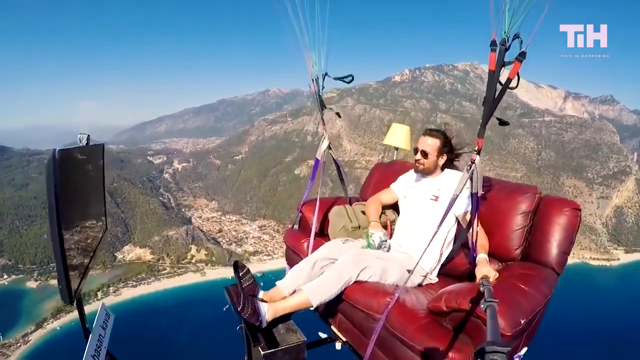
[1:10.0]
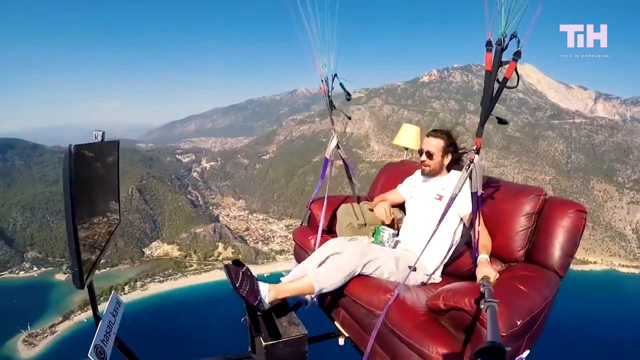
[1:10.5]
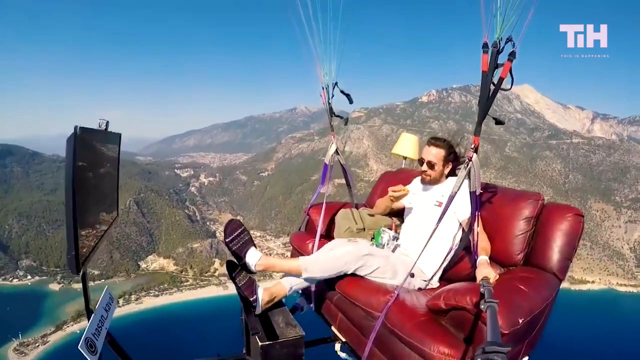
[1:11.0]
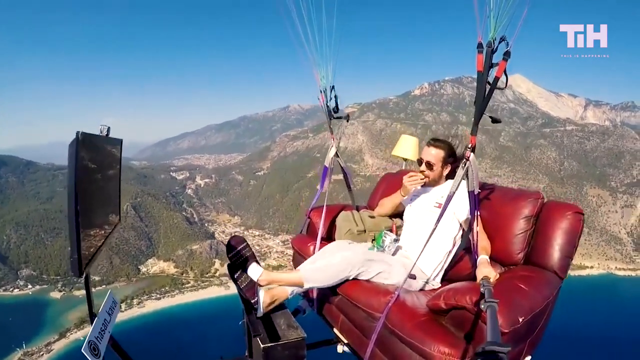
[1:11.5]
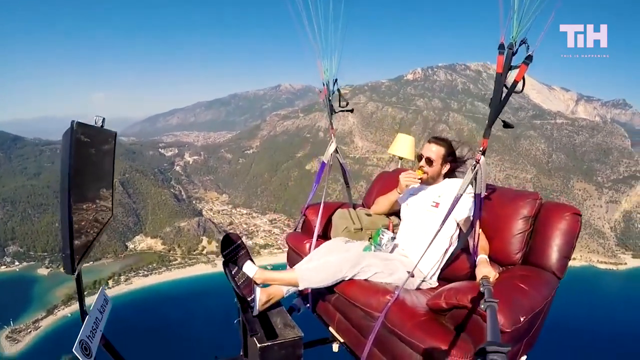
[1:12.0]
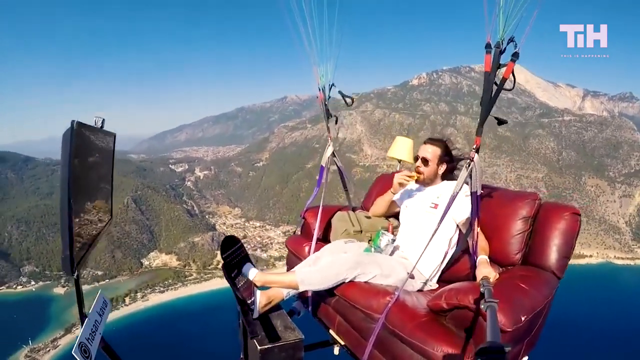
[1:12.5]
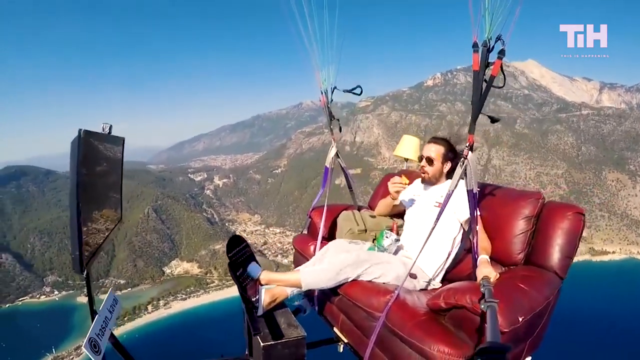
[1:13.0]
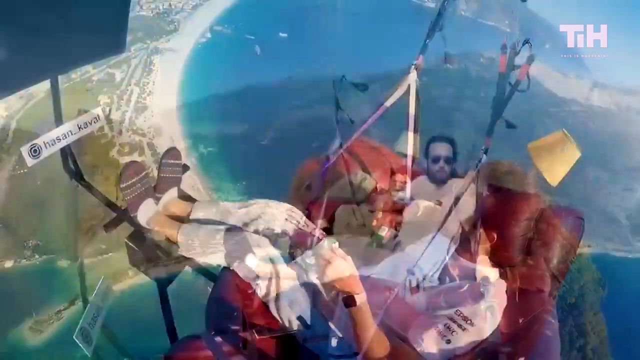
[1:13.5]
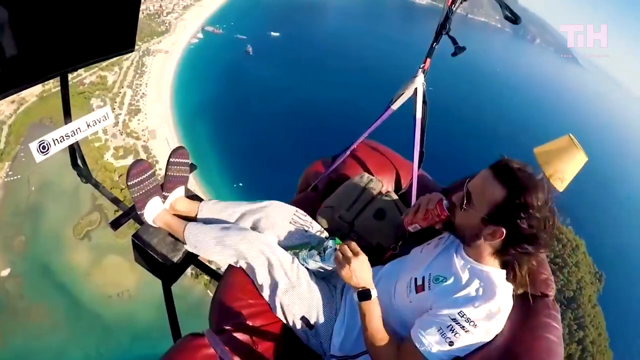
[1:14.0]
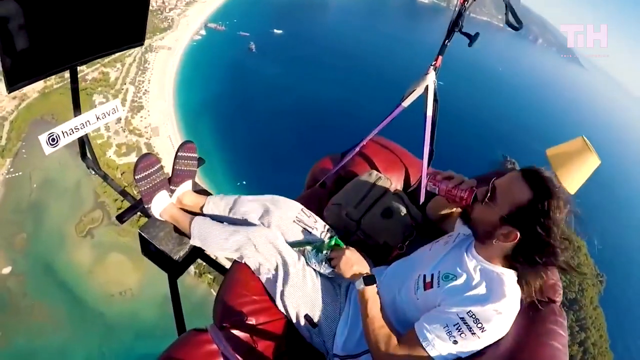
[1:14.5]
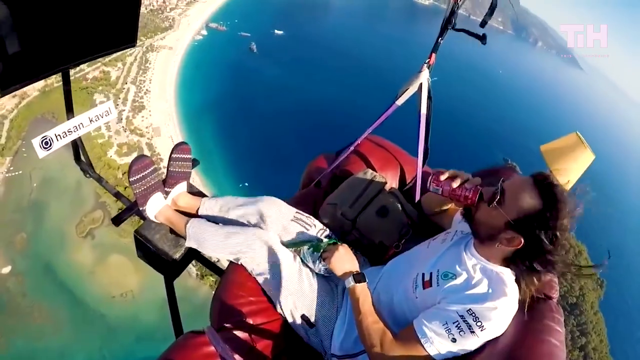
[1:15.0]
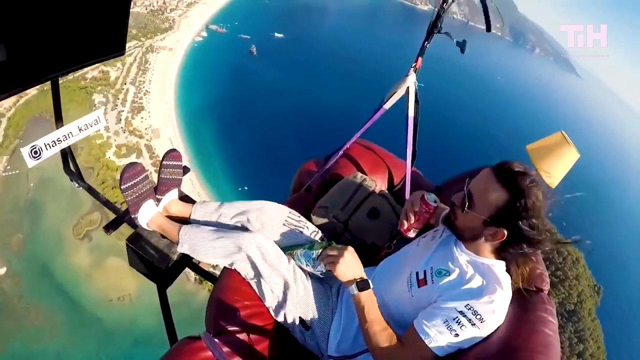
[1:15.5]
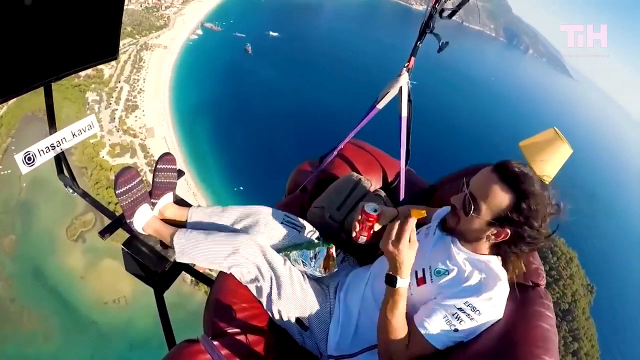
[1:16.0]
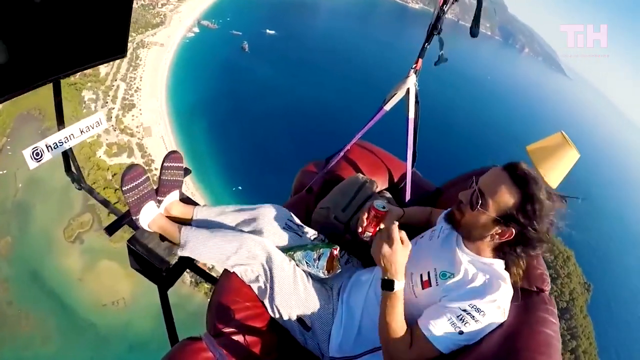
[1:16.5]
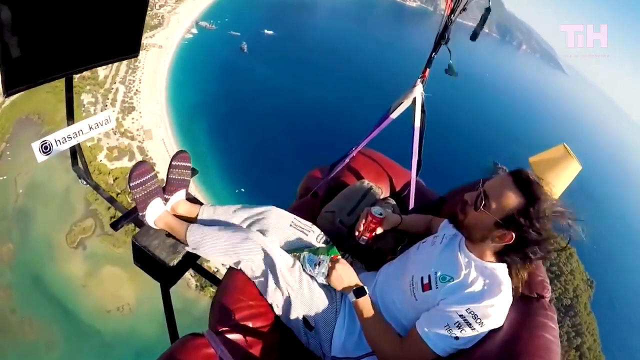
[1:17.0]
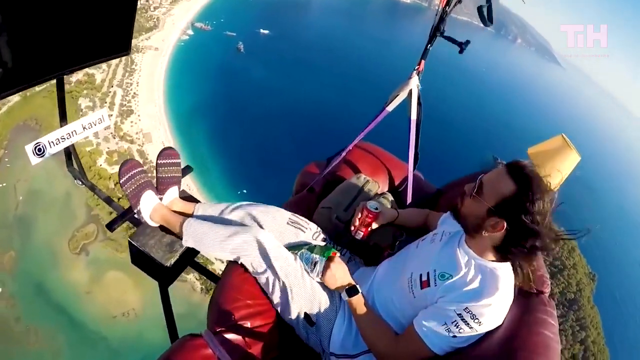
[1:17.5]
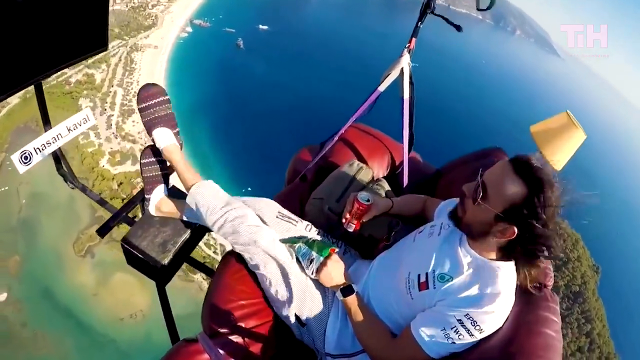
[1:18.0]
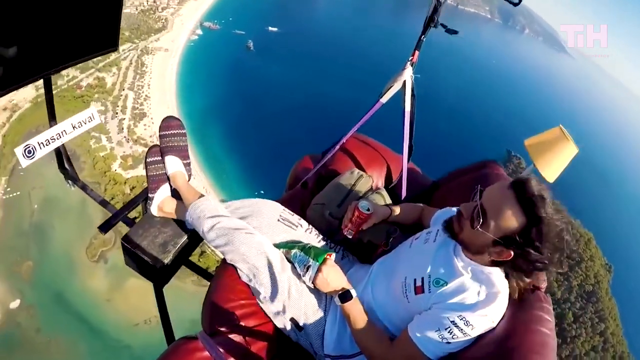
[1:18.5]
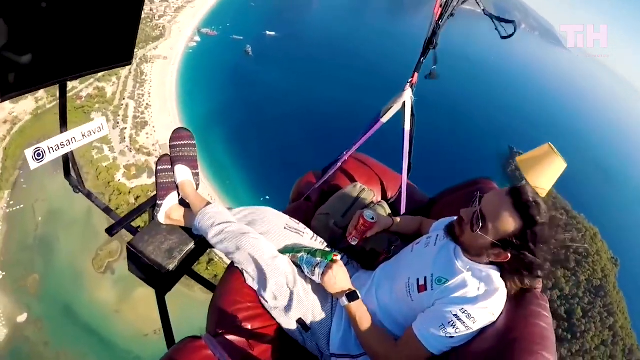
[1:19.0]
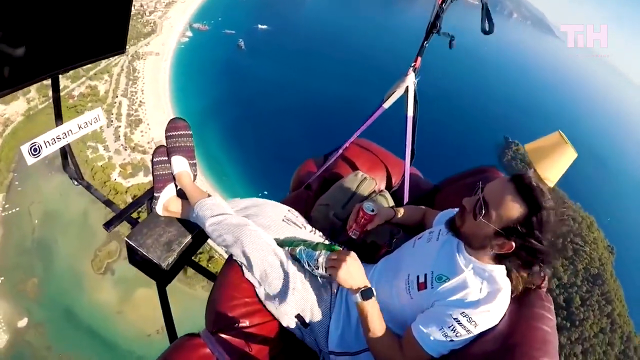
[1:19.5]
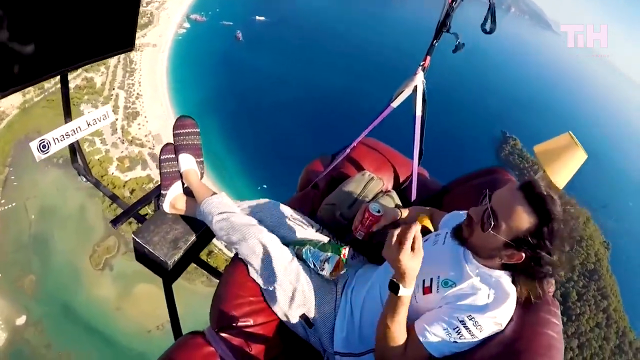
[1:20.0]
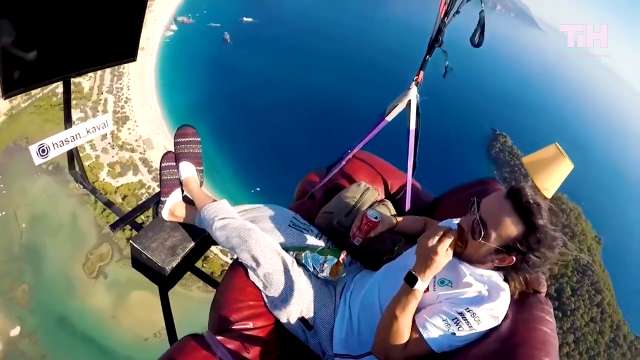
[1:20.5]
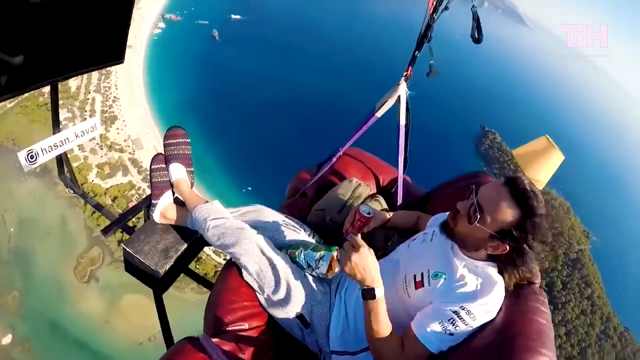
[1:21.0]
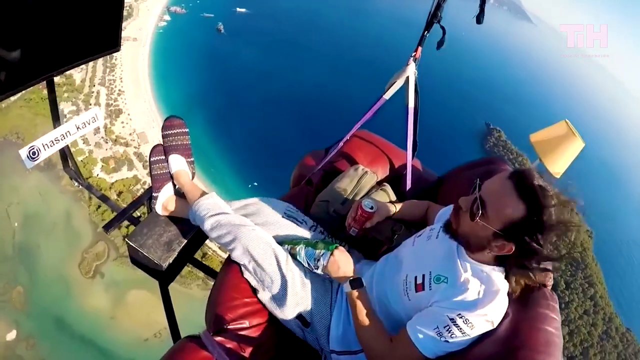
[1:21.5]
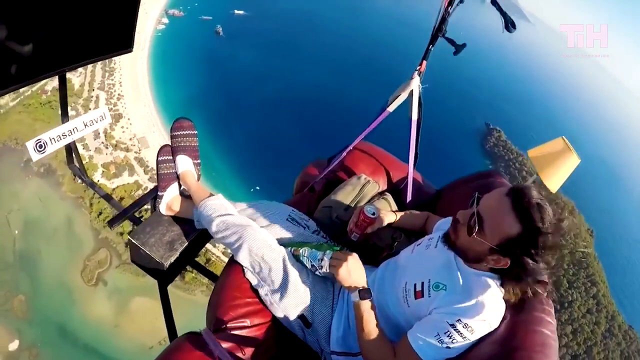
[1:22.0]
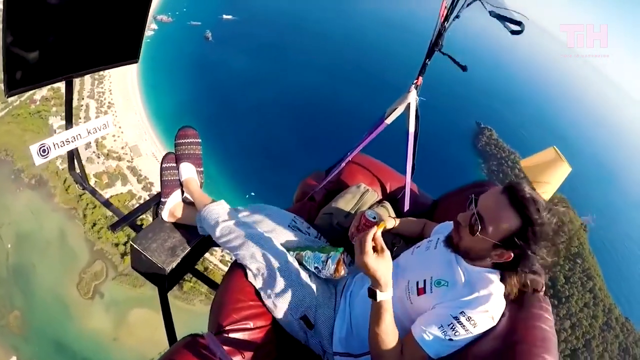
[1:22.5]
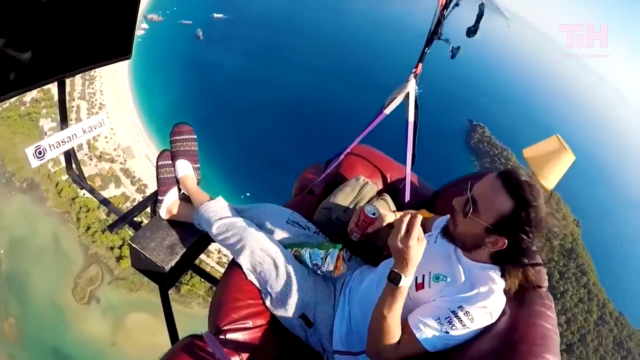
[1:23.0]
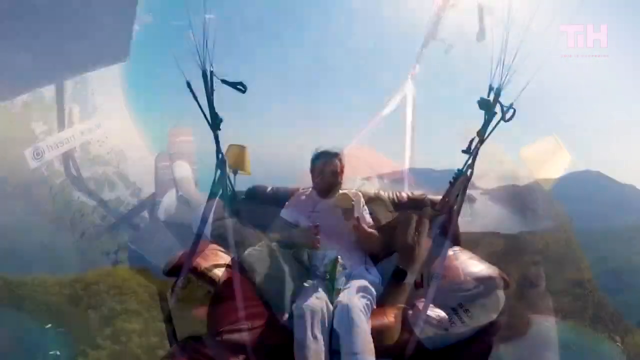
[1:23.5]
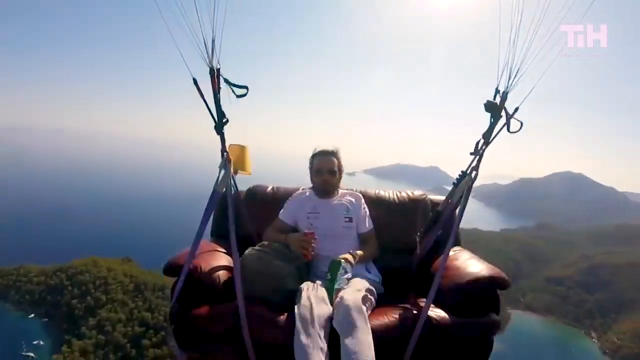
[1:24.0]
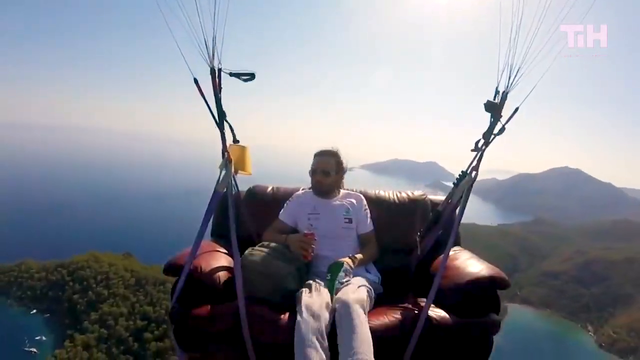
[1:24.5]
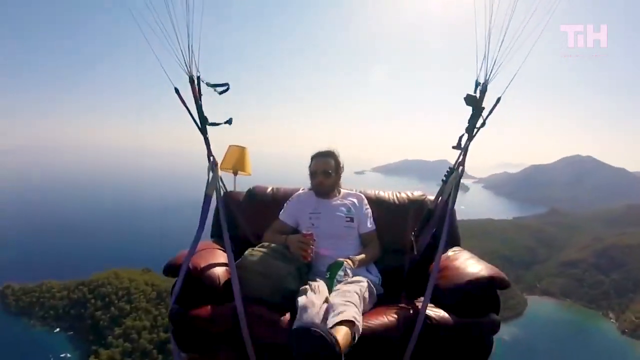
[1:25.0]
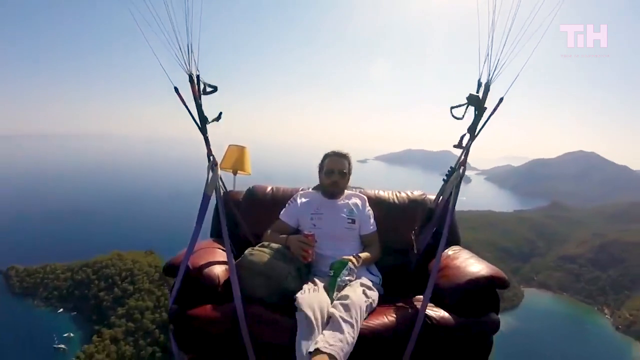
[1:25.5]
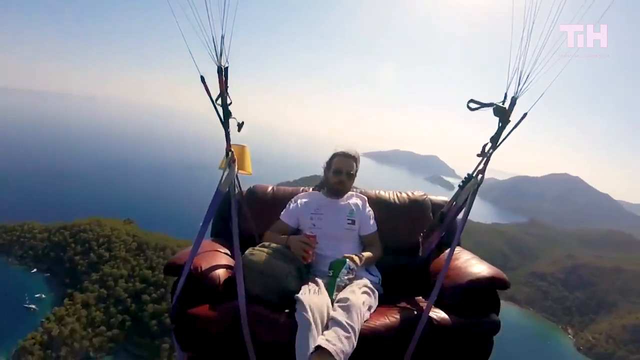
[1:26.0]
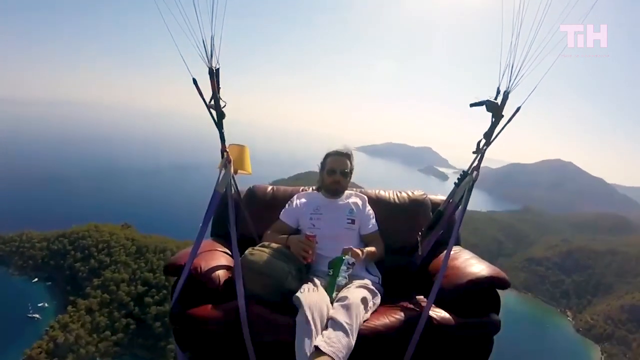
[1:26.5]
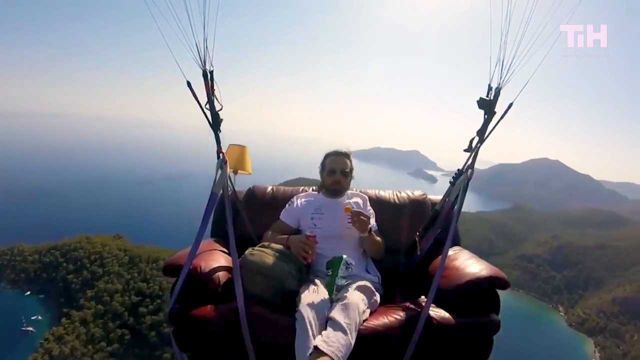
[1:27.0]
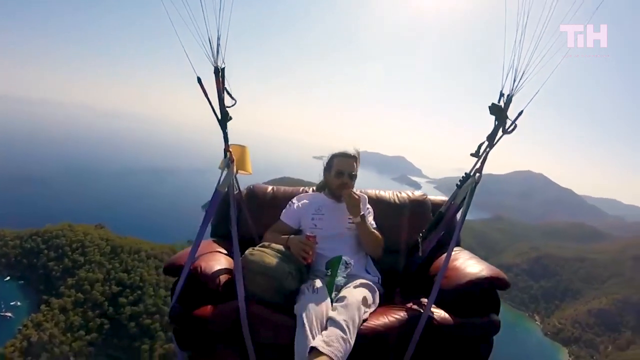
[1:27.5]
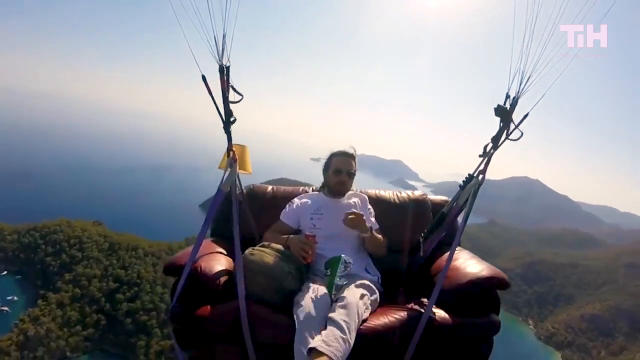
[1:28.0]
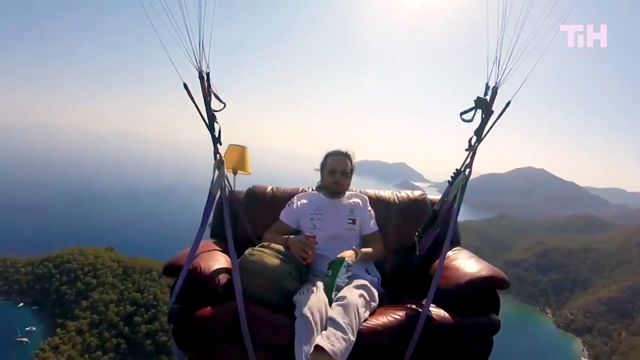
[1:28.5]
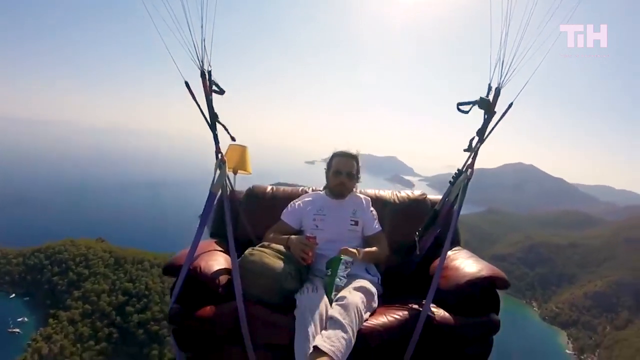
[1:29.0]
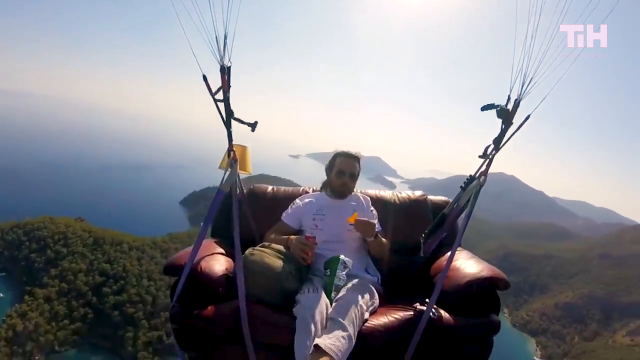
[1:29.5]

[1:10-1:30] The couch flyer rests on the couch, eating a snack and drinking a canned beverage. It is very windy, and the couch slightly wobbles back and forth as he moves through the air. His hair and his pants blow wildly in the wind, showing the force of the wind on his clothes. A backpack on the right side of the couch serves as an armrest as he holds the canned drink in his right hand. His white shirt shows the businesses Epson, Bose, TWC and TIBC on the left sleeve, with other businesses on the front and on the right sleeve; these appear to be sponsors of his flight. The lamp behind the couch trembles in the wind. Below him are bodies of land and water, boats docked along the coastline, and small, heavily forested islands. There are approximately six sailing vessels in the water beneath him. Many bodies of water are cut off by land structures and small surrounding islands, and some bodies of water are bluer than others.